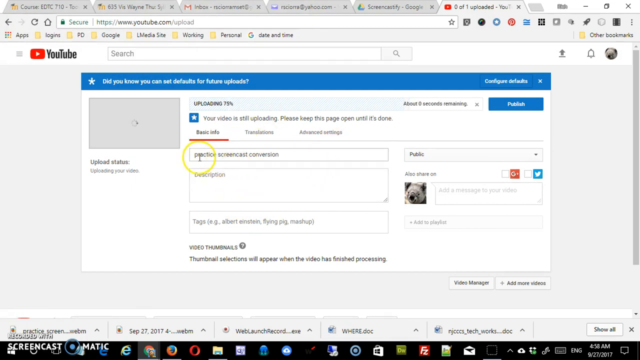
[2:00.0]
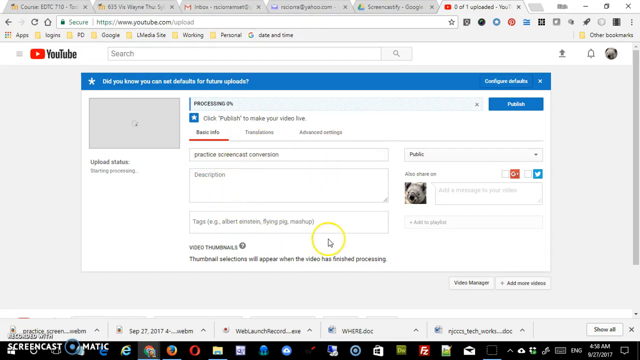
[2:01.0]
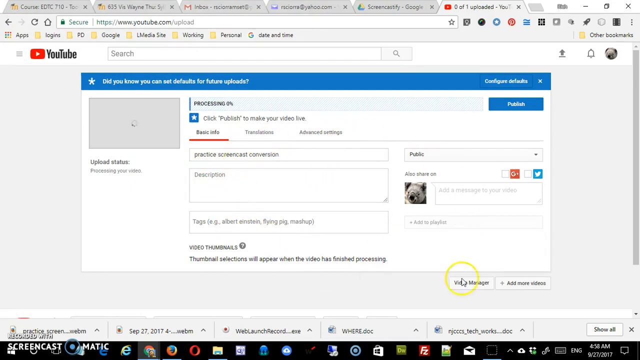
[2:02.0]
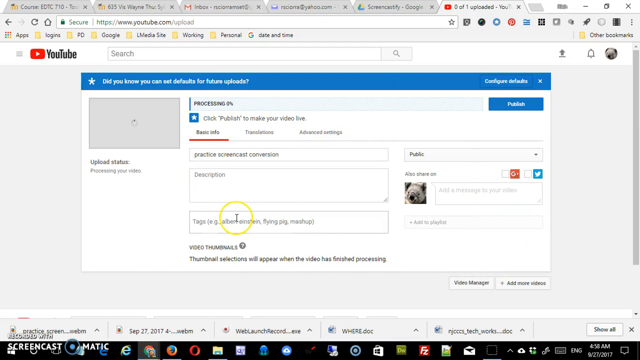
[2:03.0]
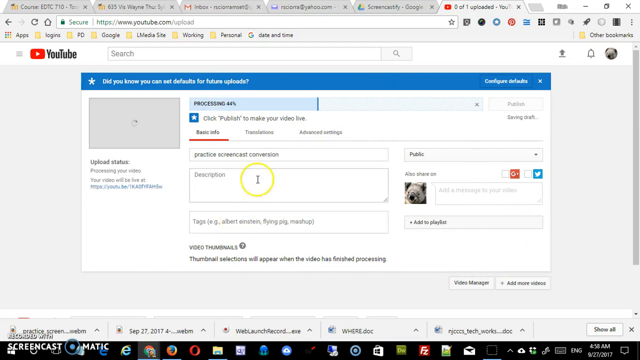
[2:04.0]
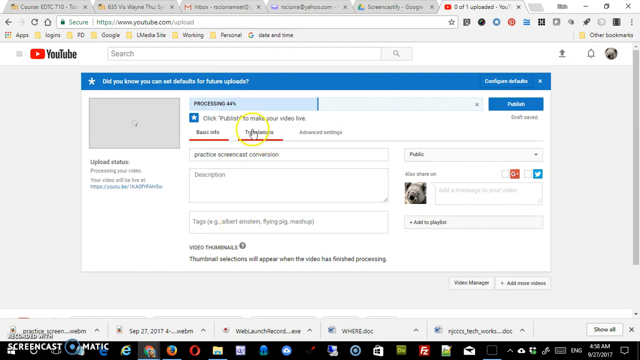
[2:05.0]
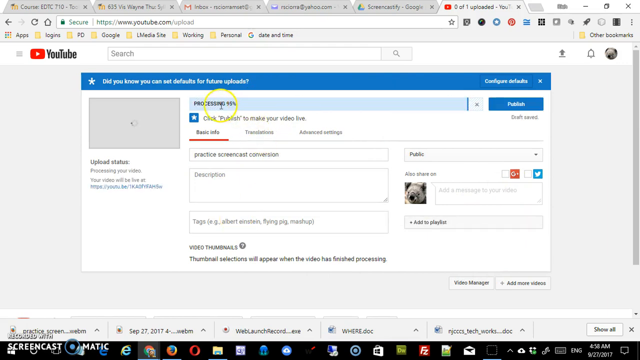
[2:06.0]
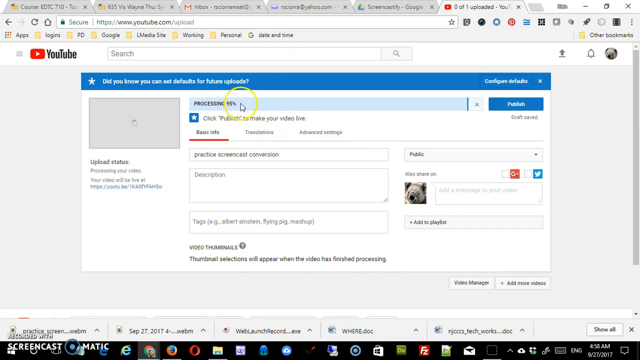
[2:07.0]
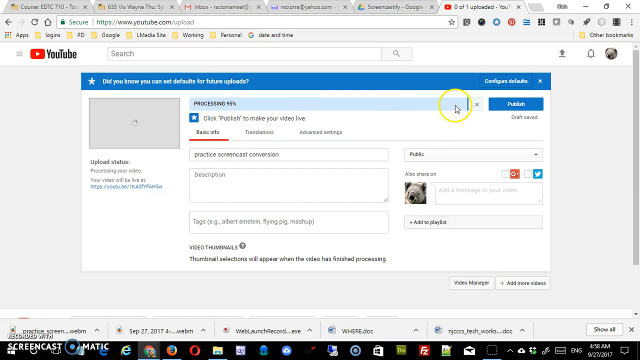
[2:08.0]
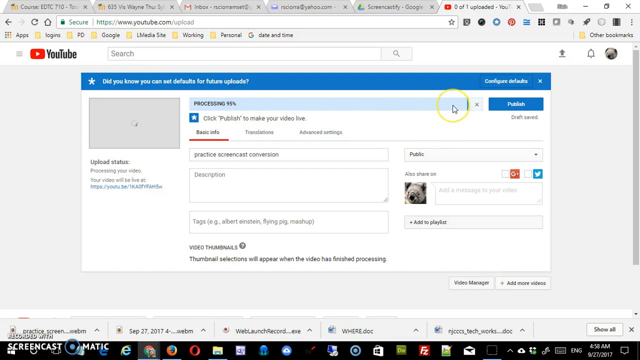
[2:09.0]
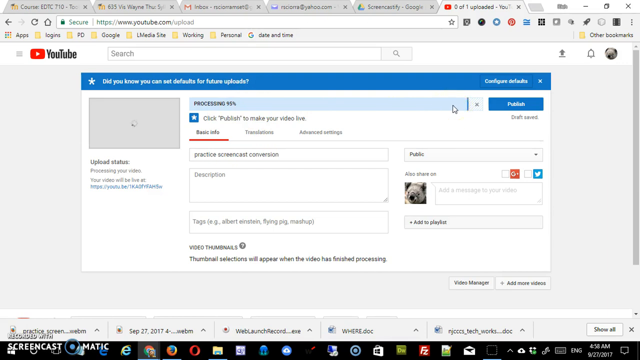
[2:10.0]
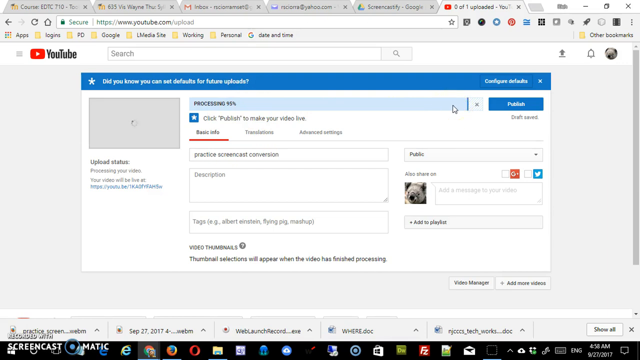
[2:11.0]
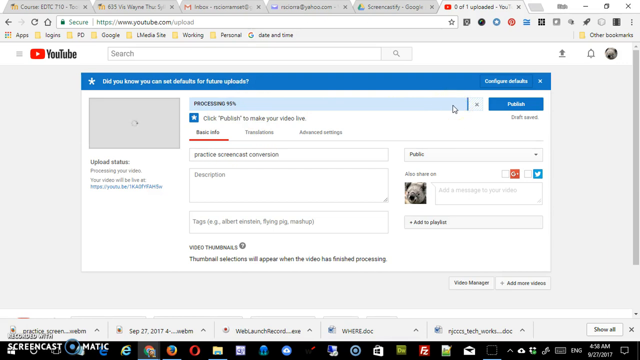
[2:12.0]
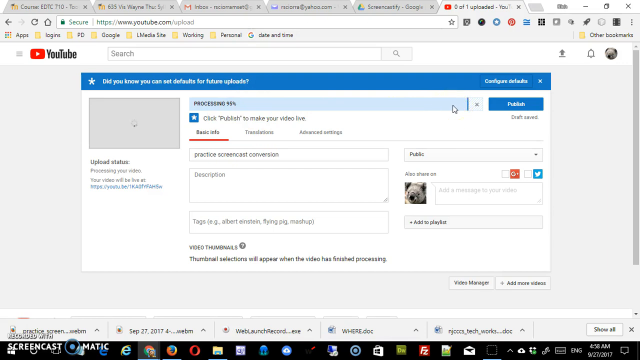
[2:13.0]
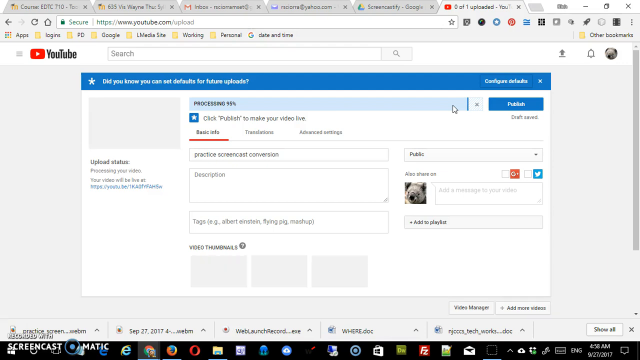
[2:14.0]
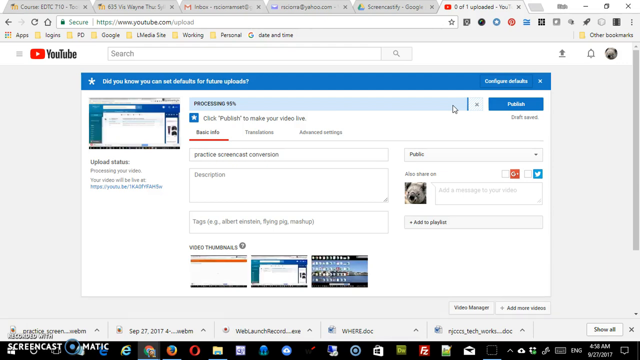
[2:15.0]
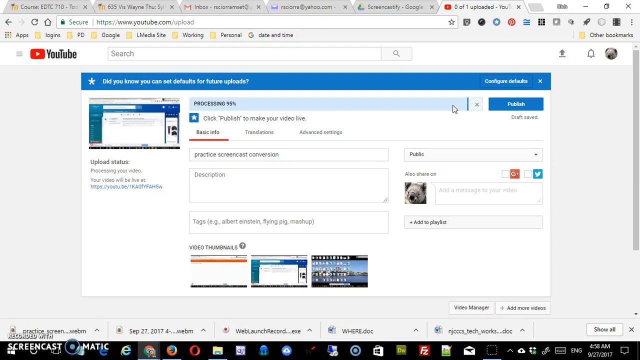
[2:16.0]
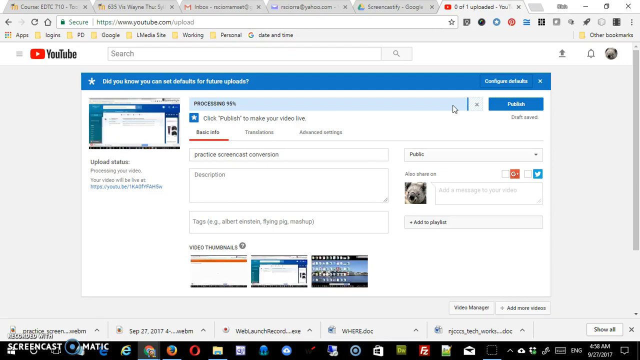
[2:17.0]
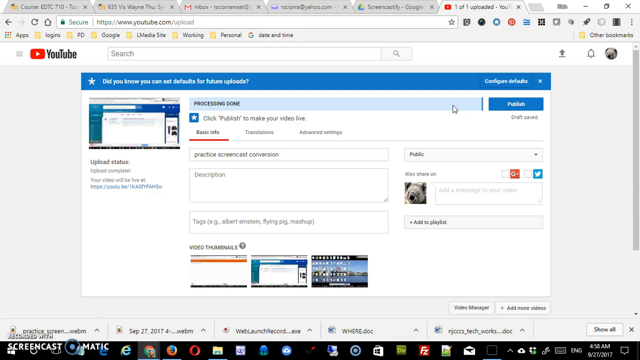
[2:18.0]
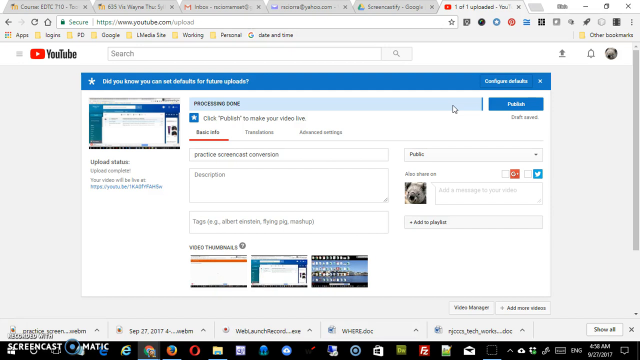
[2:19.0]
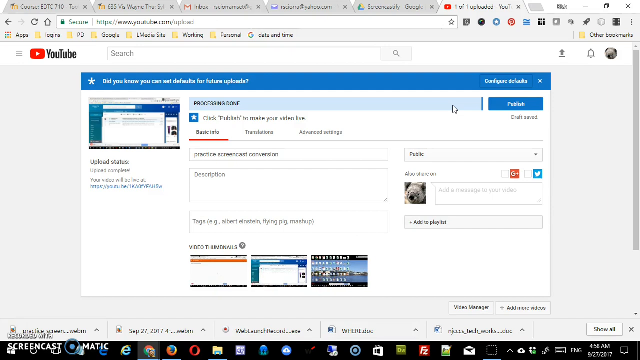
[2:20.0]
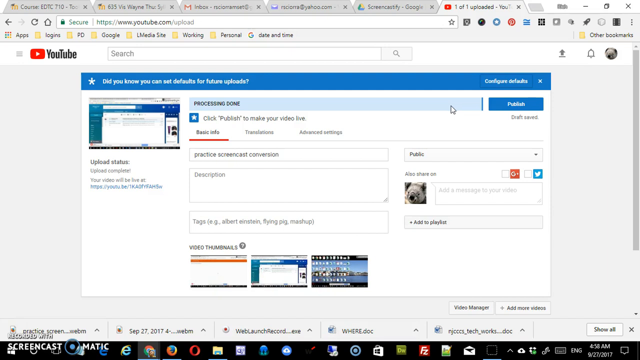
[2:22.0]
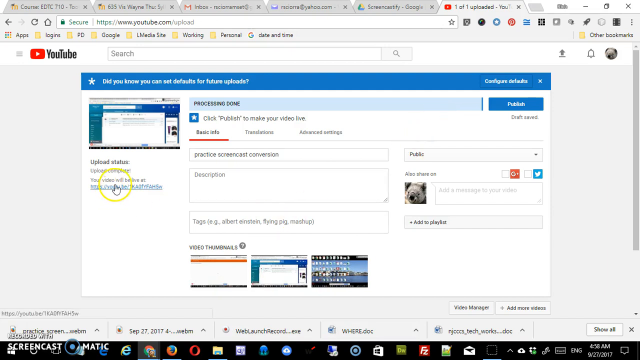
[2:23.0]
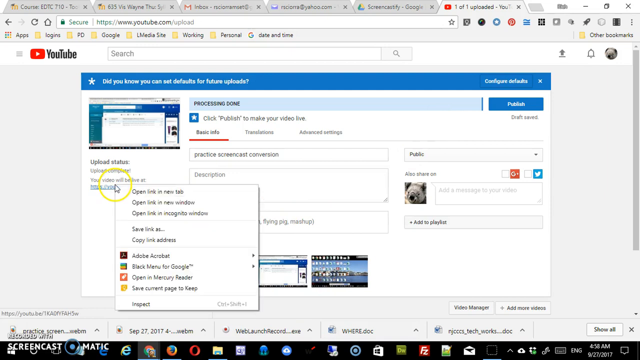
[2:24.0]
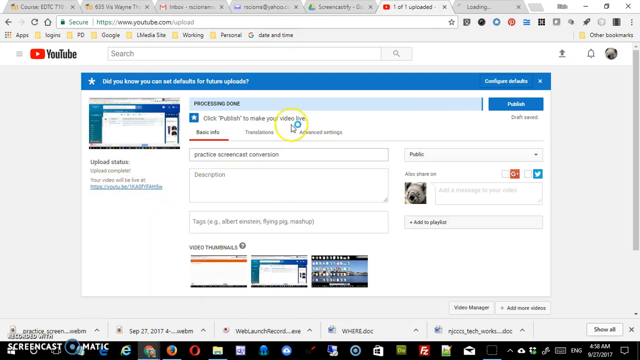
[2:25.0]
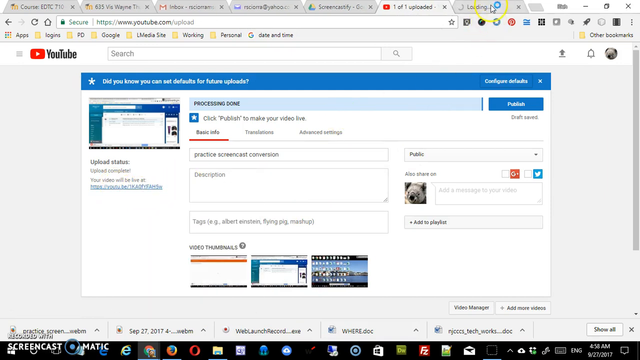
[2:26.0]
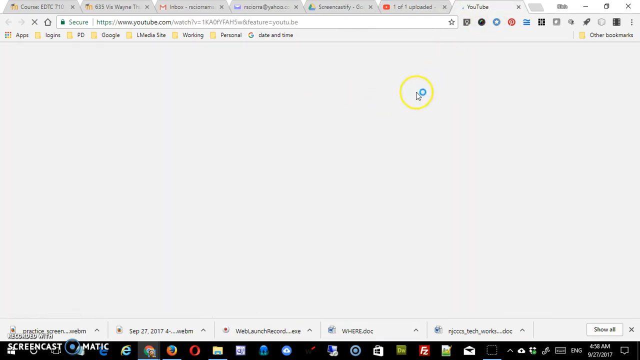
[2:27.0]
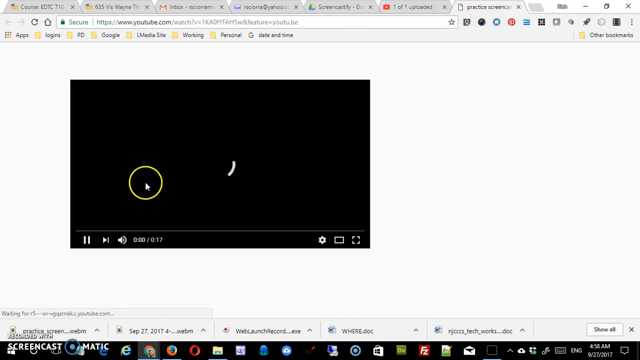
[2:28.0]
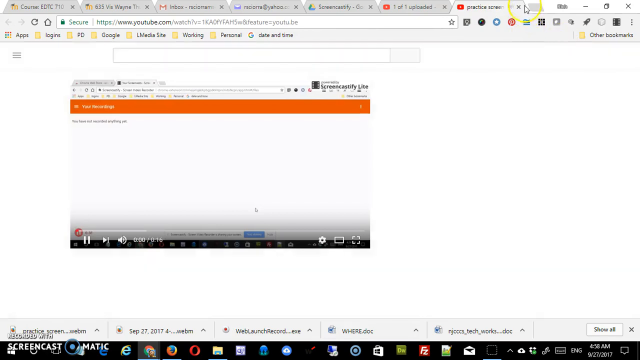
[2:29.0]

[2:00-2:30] A desktop shows a window with six tabs open, set to the YouTube tab. A picture of a pug or some other animal is in the top right corner, and a blue box is on the screen. The person moves the mouse around and clicks different items in the blue box area, seemingly getting ready to upload a file from their computer to the YouTube channel on their account, going step by step through what to click, how to load it into the account, and where to check that it plays properly. The mouse pointer is a regular arrow surrounded by a yellow circle that makes it easy to follow.